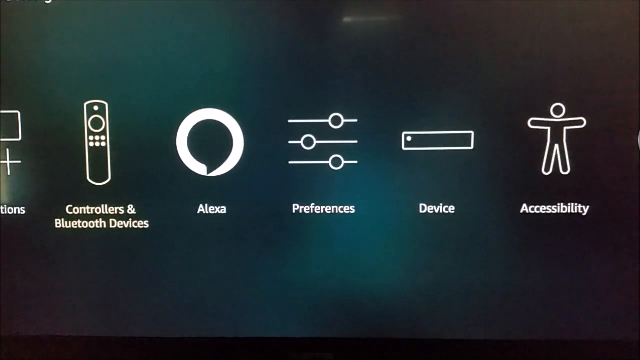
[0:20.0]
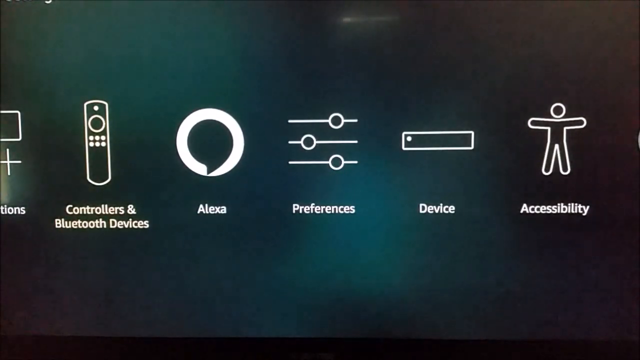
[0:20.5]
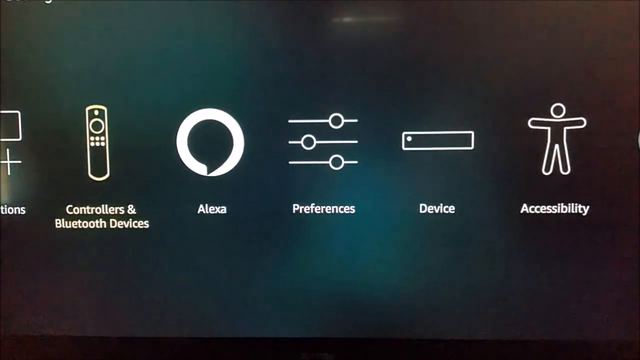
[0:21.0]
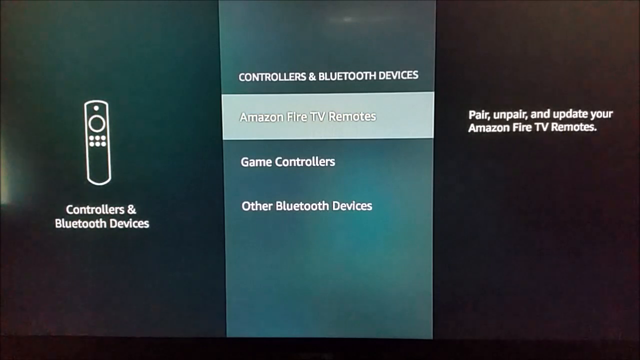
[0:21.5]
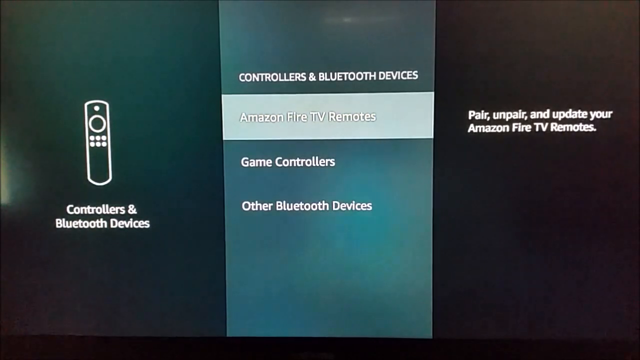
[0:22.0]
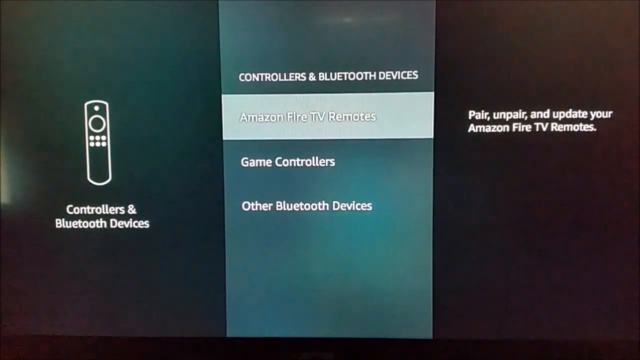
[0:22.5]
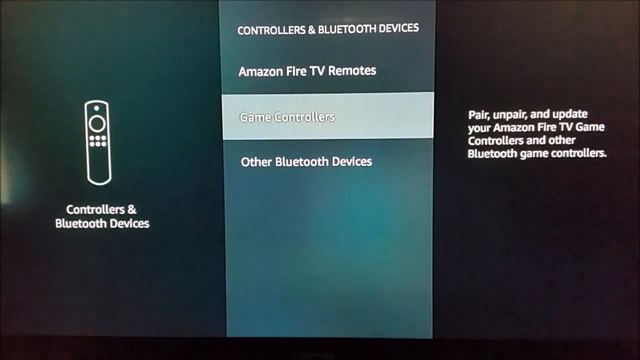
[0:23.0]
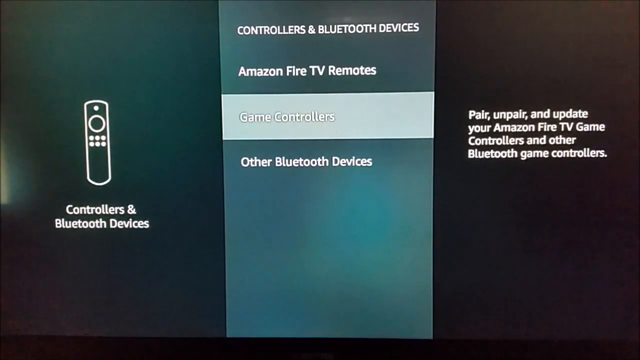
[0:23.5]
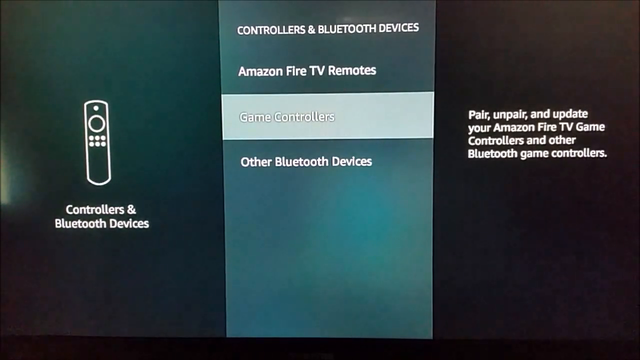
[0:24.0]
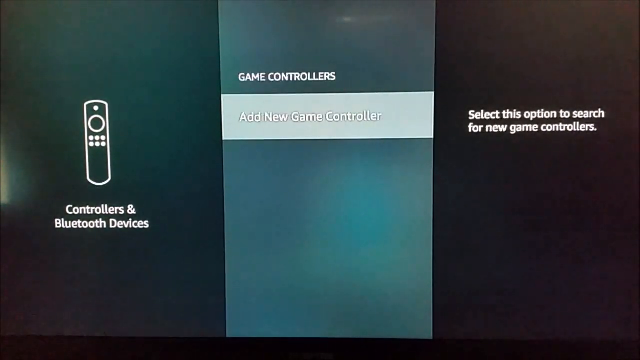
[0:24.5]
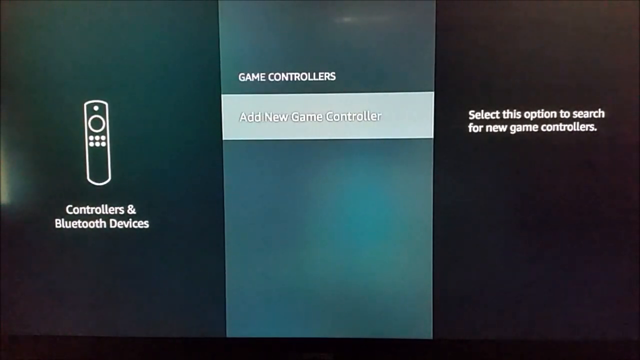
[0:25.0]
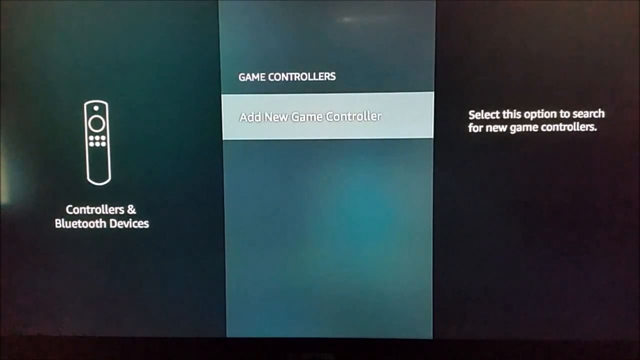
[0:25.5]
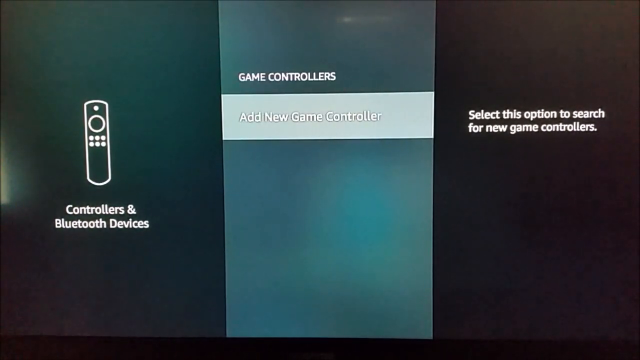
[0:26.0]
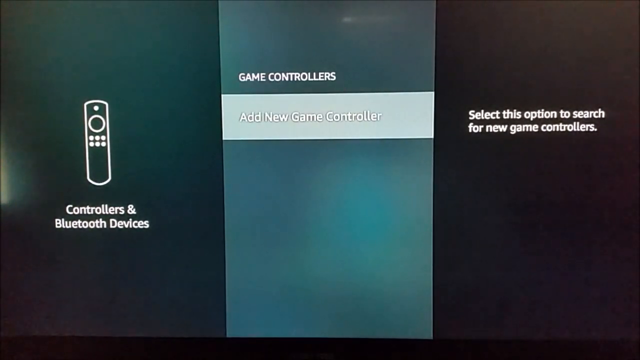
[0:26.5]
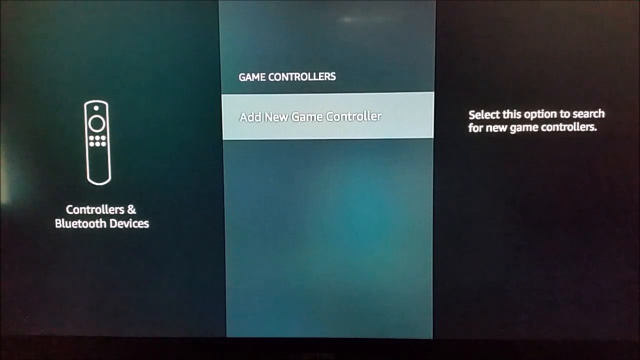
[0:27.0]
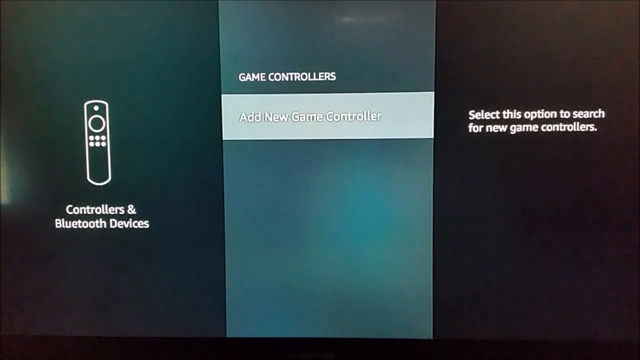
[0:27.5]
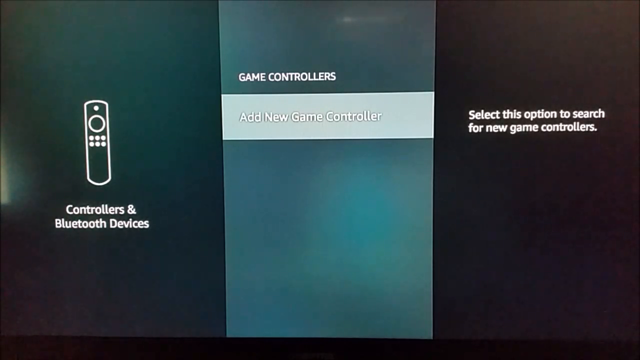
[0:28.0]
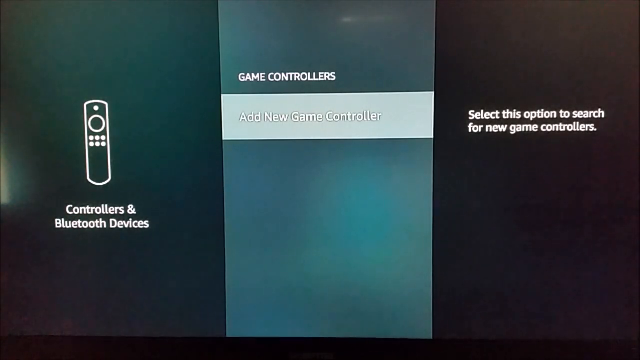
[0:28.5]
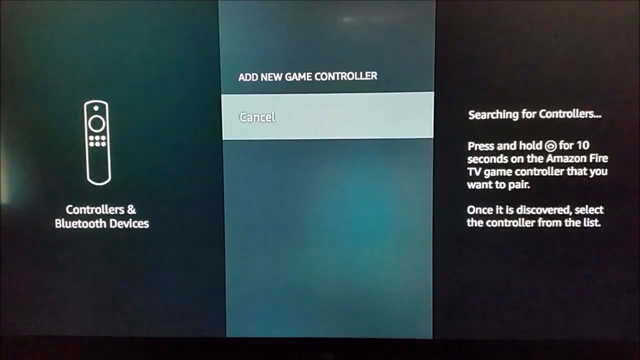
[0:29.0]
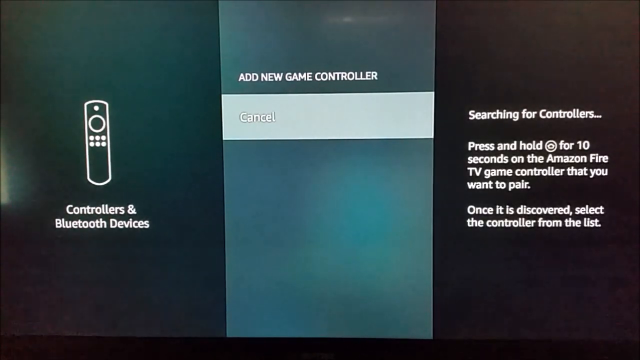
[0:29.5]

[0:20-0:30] The same smart TV page appears, and the user browses through Twitch, YouTube, Bluetooth, Tubi TV, Firefox, Netflix, music and photos. The user goes to remote control and Bluetooth devices, apparently starts adding a new game controller, and then cancels it. "Search for controllers" appears on screen, and the screen goes back to what seems to be the sources or settings.